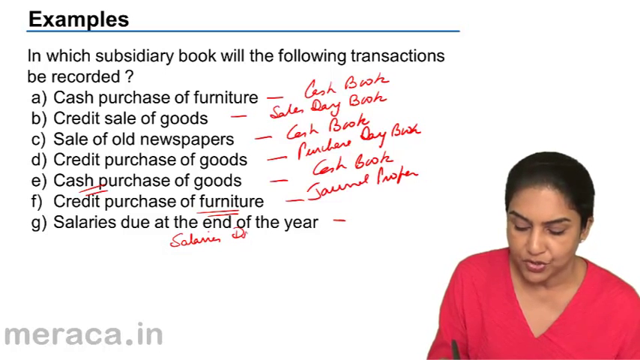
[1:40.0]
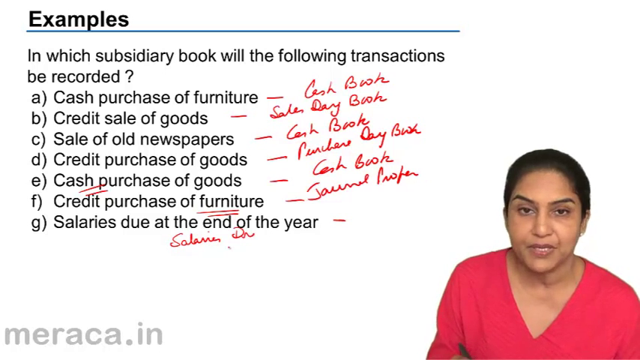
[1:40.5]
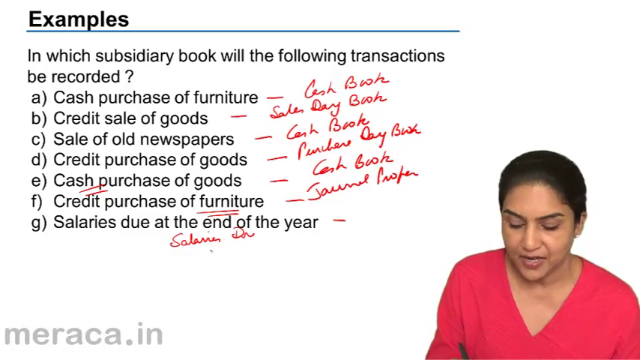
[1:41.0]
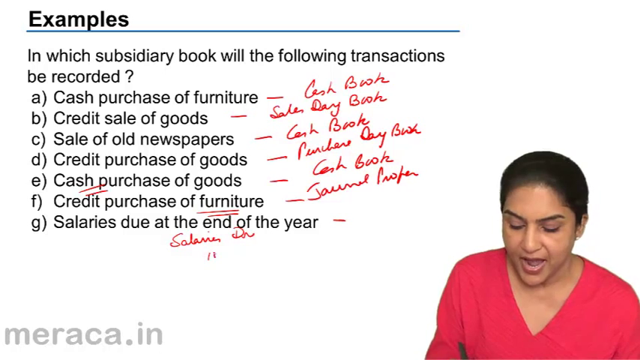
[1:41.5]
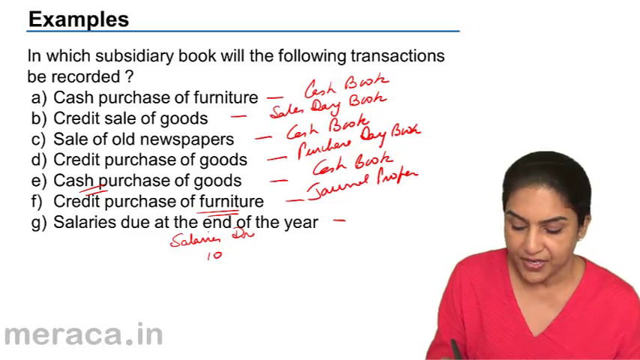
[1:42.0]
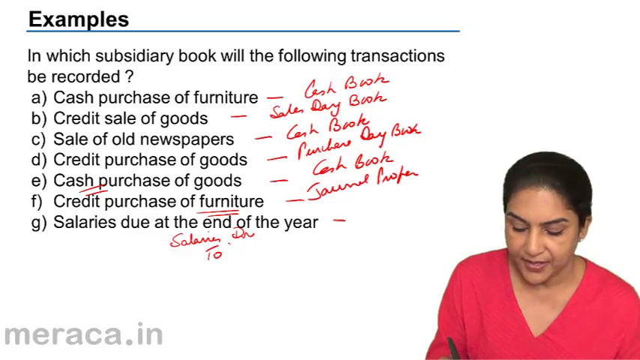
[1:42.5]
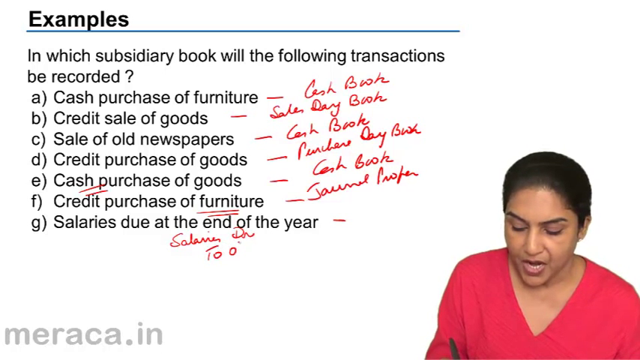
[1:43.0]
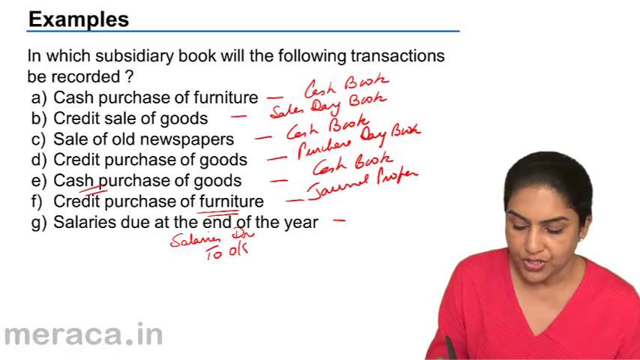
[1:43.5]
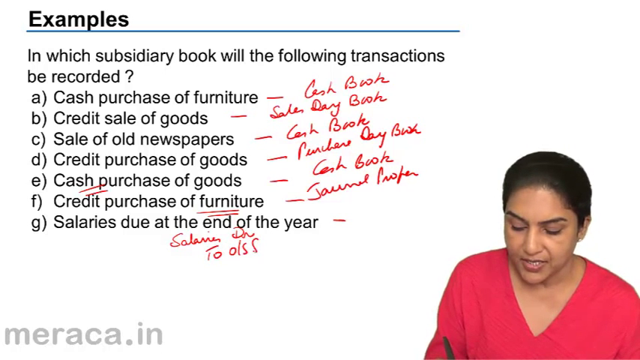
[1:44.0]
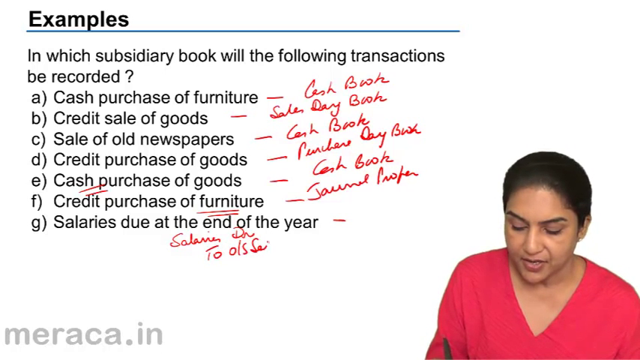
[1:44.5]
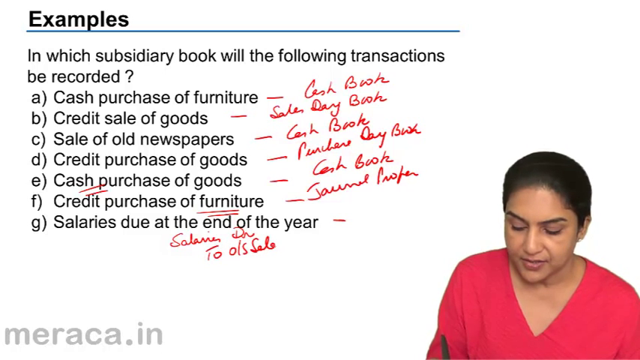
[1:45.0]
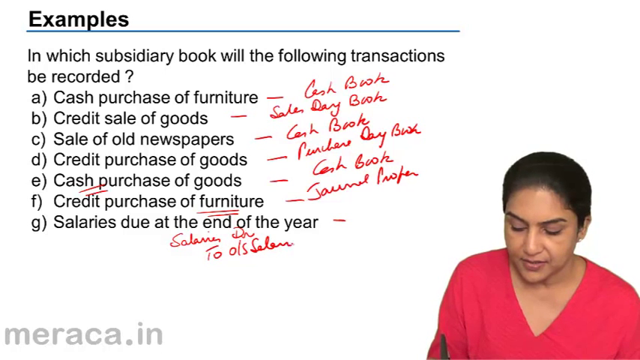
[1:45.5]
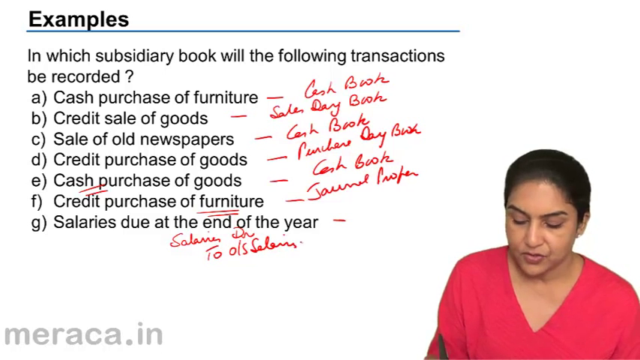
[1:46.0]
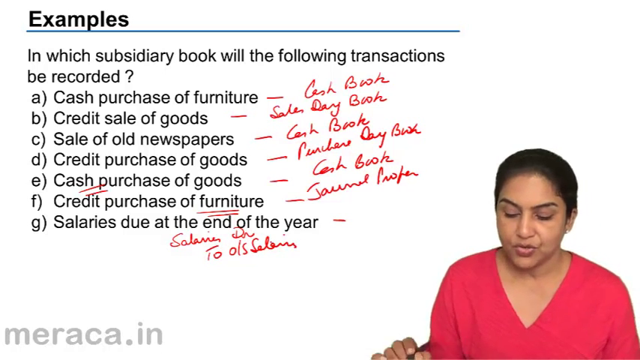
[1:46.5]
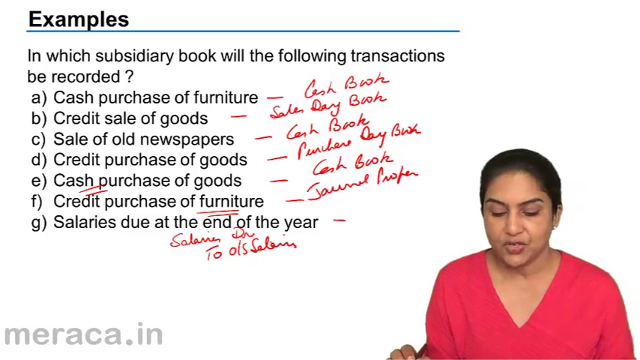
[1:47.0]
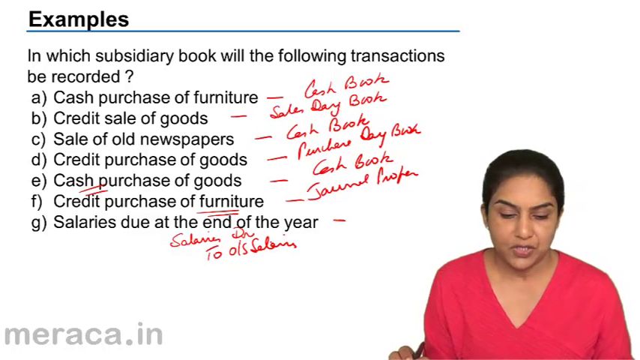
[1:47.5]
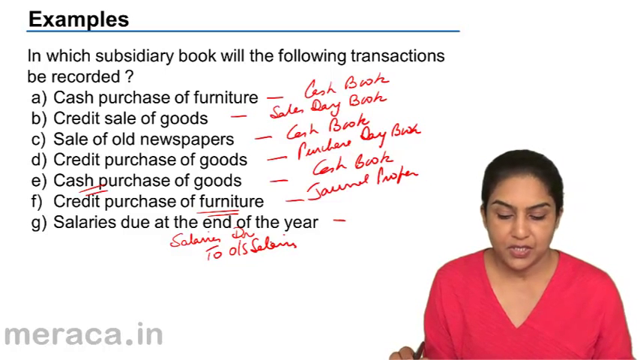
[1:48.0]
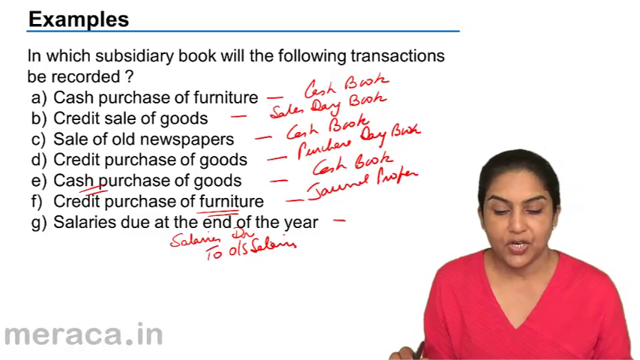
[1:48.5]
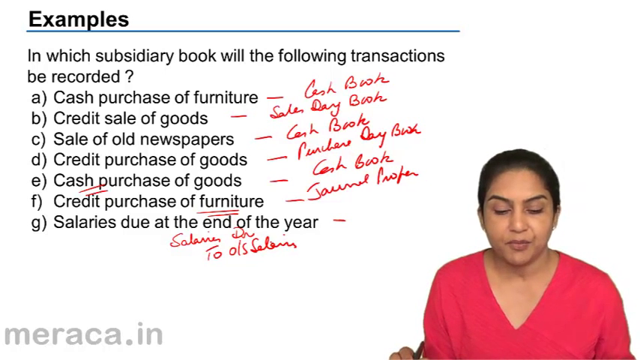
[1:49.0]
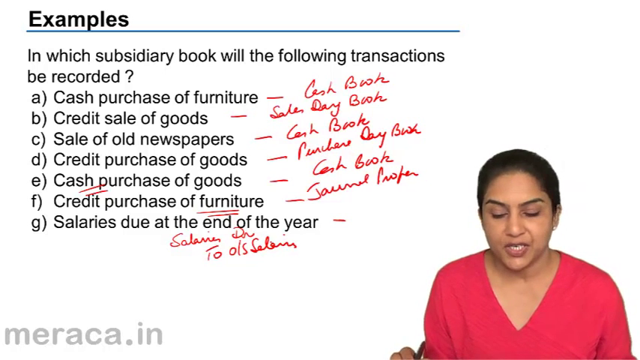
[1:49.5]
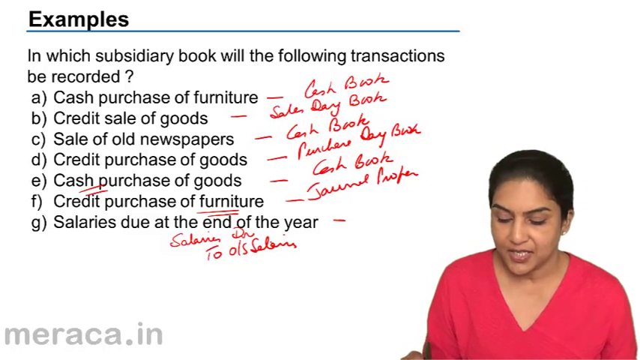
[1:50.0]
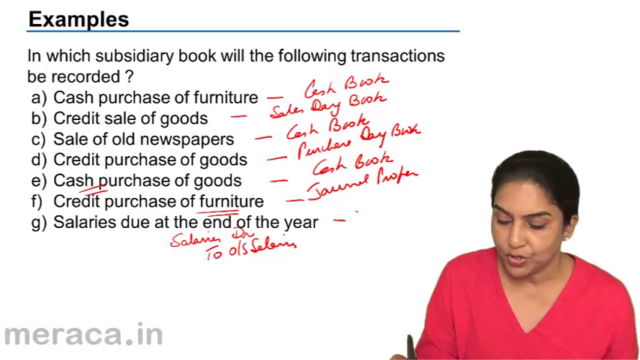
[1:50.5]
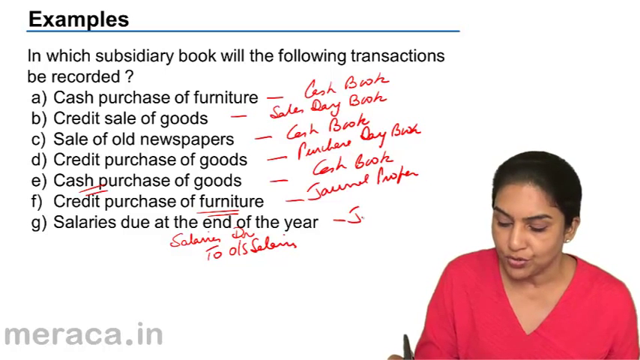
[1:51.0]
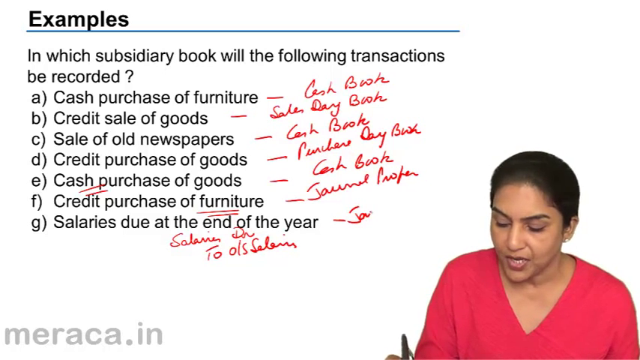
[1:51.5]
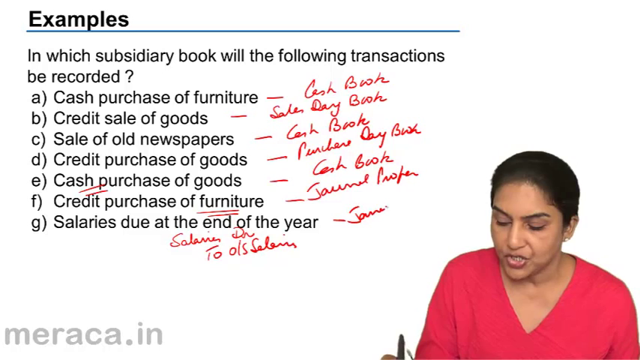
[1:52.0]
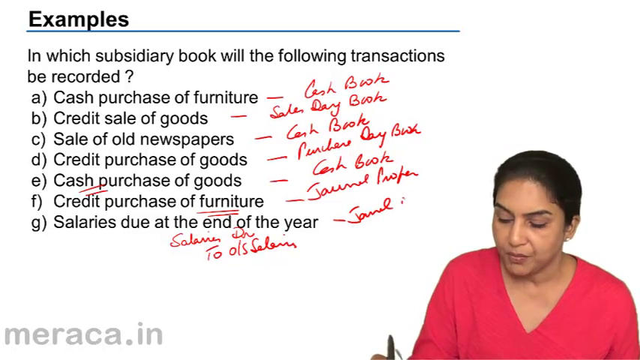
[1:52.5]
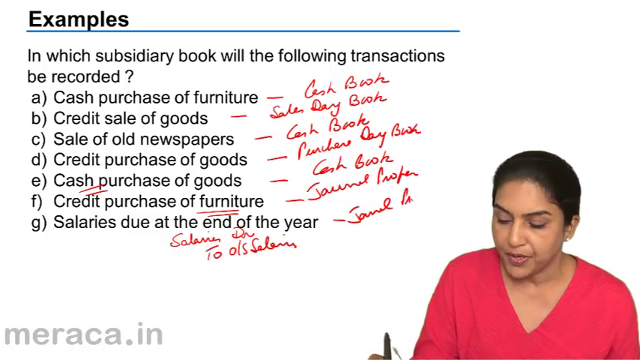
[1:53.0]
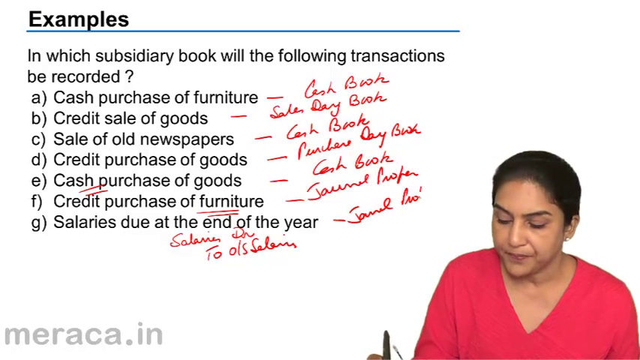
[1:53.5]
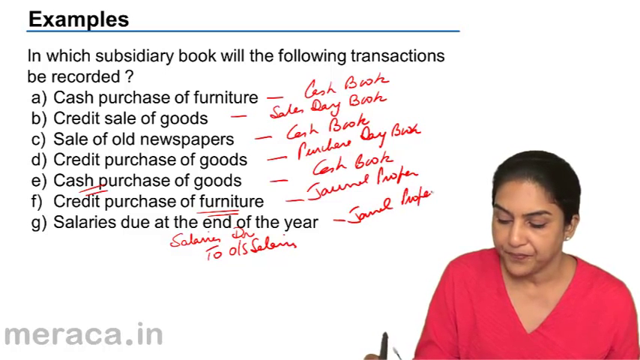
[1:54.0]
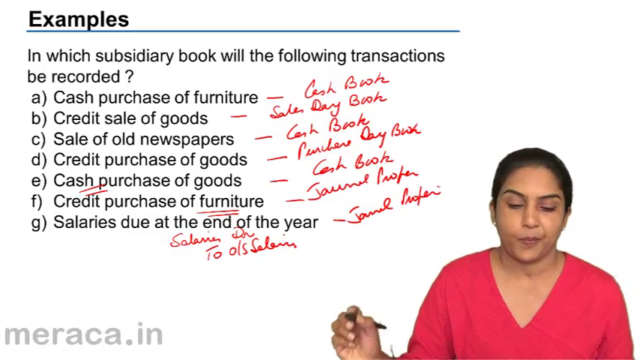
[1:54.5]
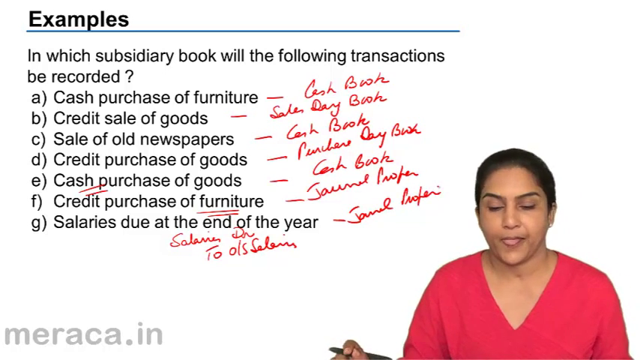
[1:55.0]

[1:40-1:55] Below option G her writing reads "salaries, DR", followed apparently by "tools", and then a word beginning "S-E-L-E" whose rest is unclear. She then writes something to the right of option G reading "journal" followed by a word that is either "proper" or "offer". The instructor hardly changes her expression; she looks up periodically before writing on her tablet, sometimes makes a few small hand gestures, and pretty much stays in place.